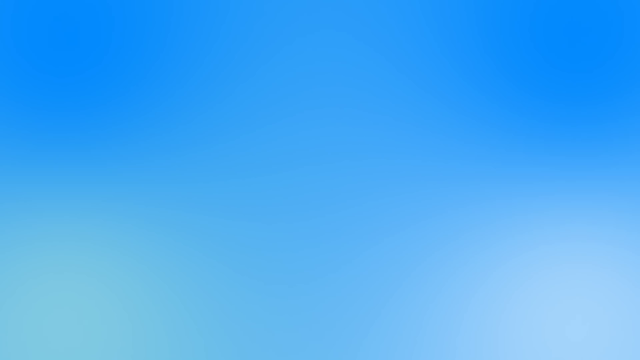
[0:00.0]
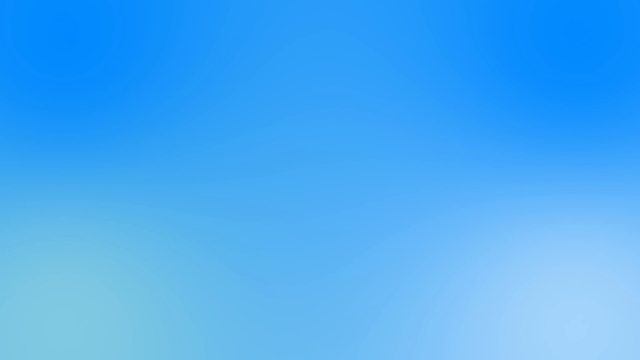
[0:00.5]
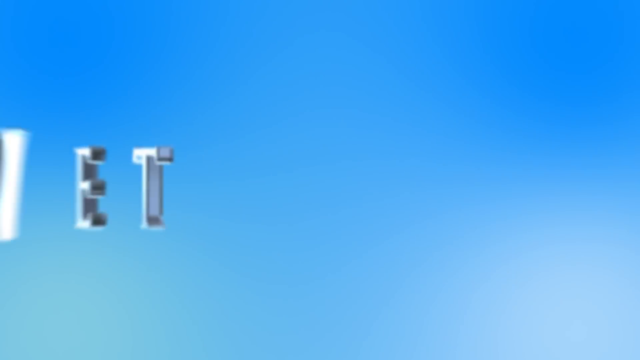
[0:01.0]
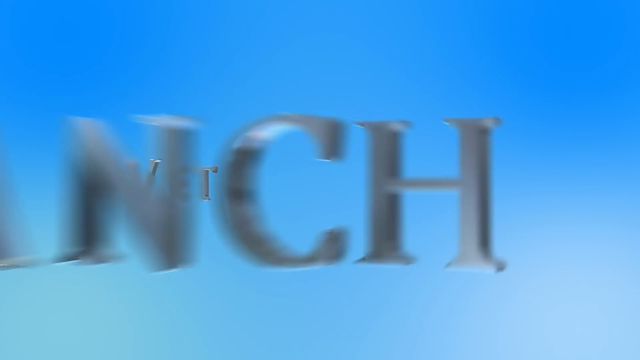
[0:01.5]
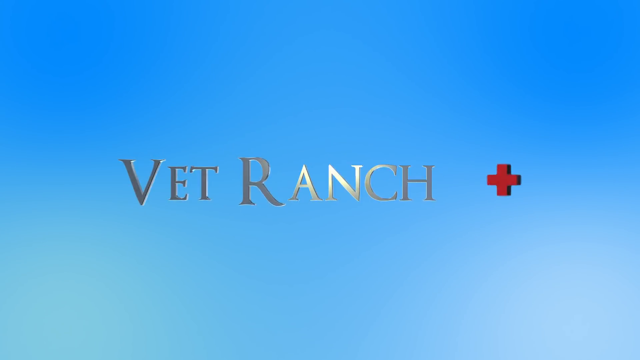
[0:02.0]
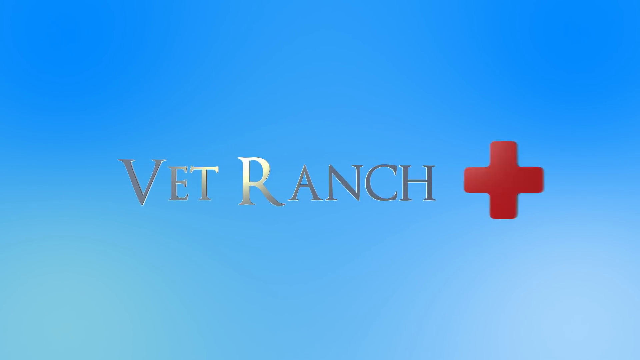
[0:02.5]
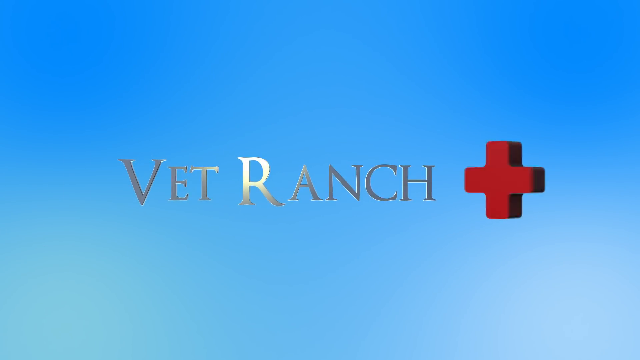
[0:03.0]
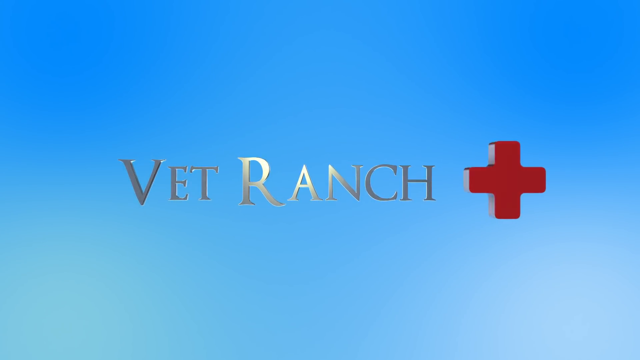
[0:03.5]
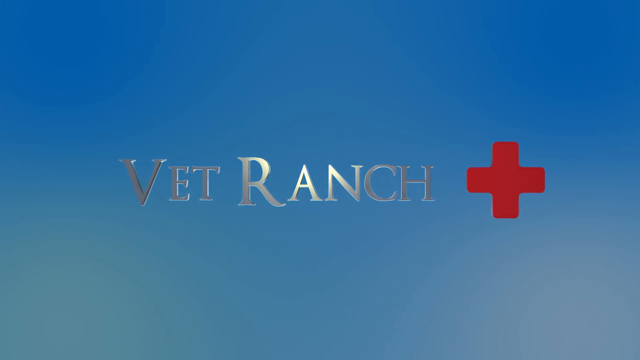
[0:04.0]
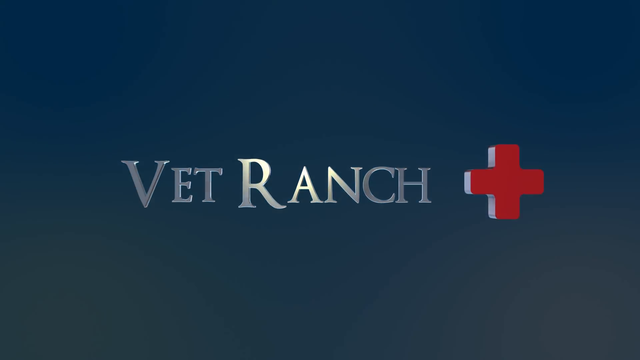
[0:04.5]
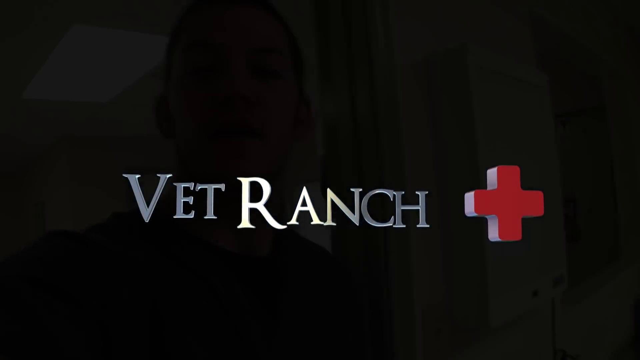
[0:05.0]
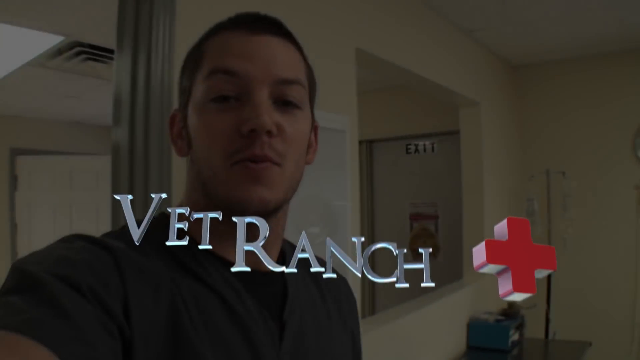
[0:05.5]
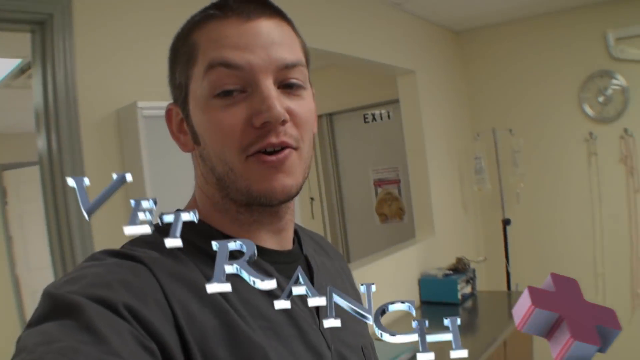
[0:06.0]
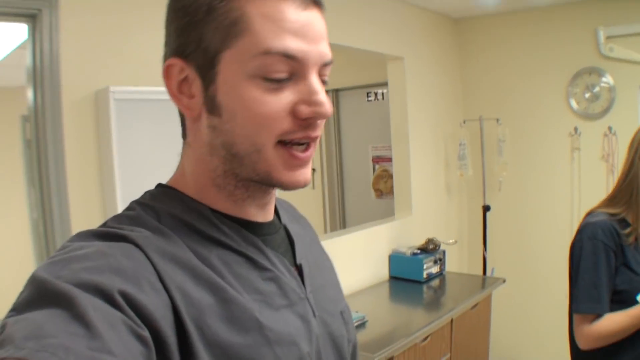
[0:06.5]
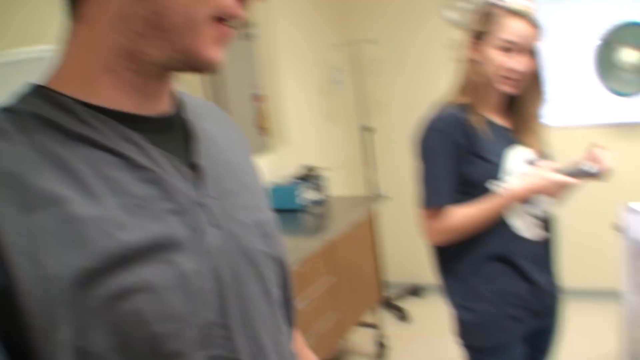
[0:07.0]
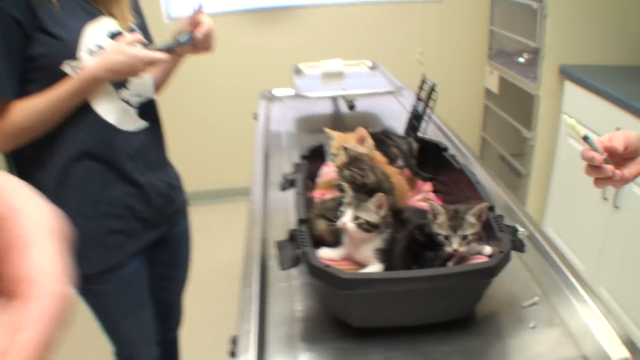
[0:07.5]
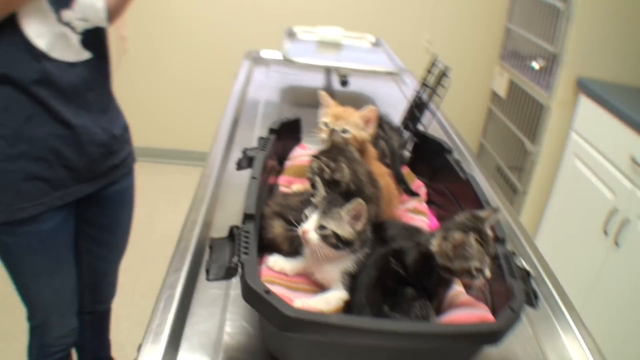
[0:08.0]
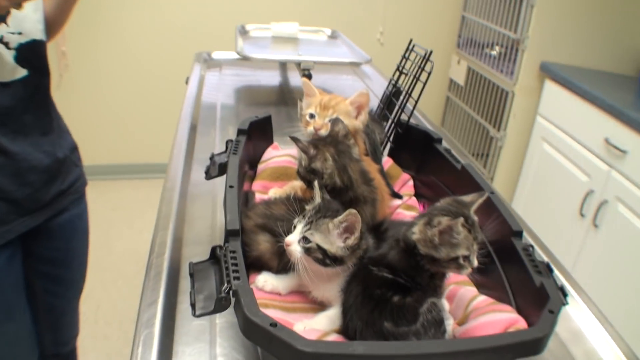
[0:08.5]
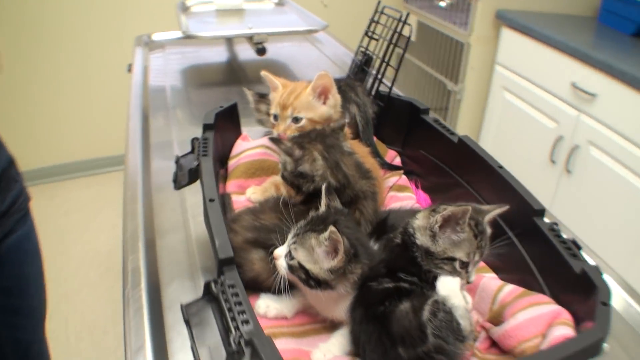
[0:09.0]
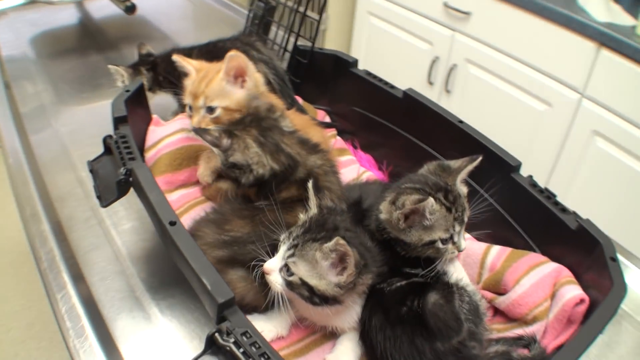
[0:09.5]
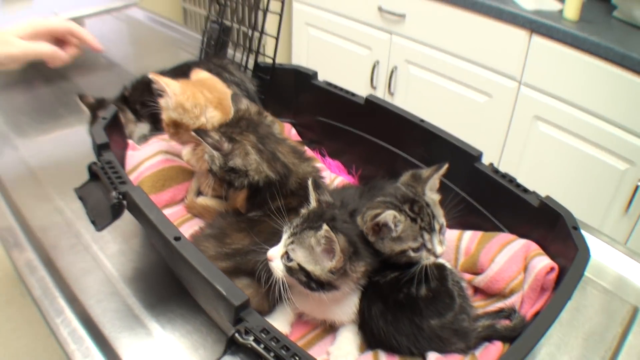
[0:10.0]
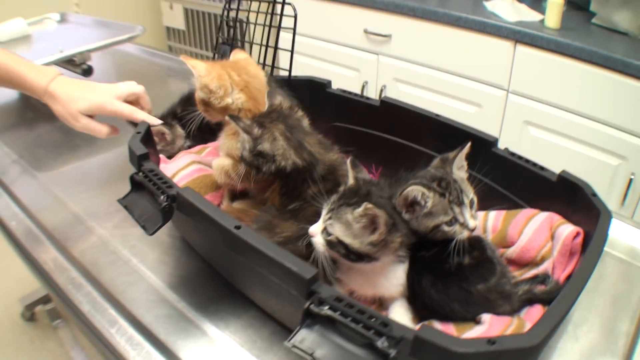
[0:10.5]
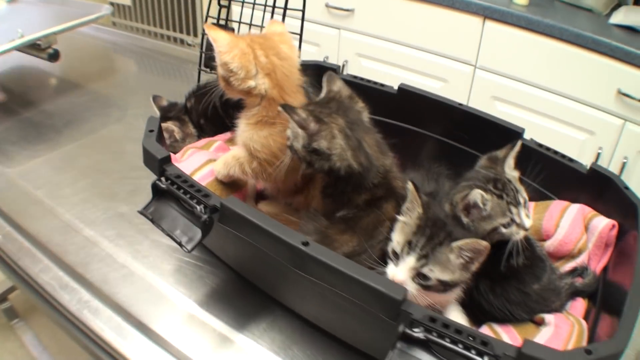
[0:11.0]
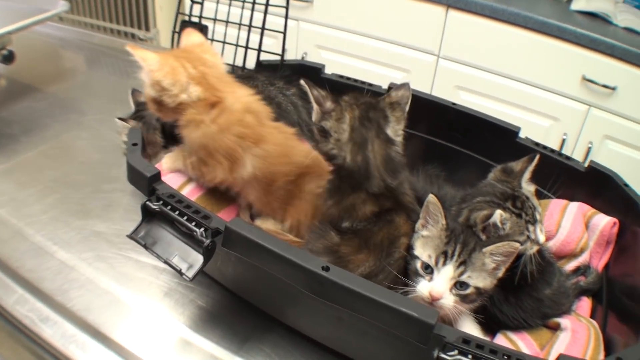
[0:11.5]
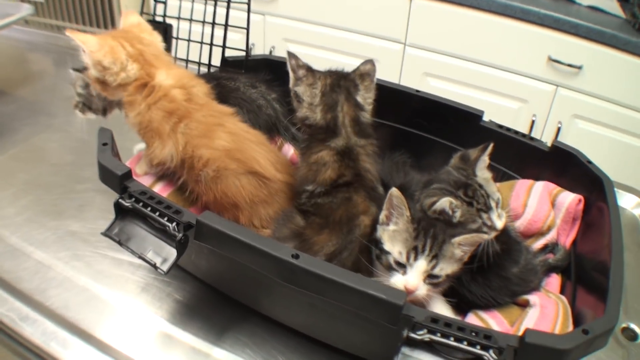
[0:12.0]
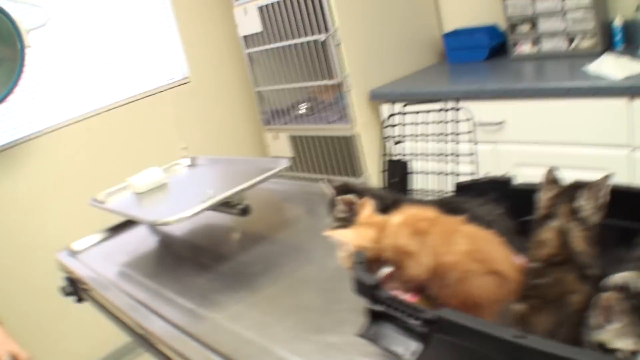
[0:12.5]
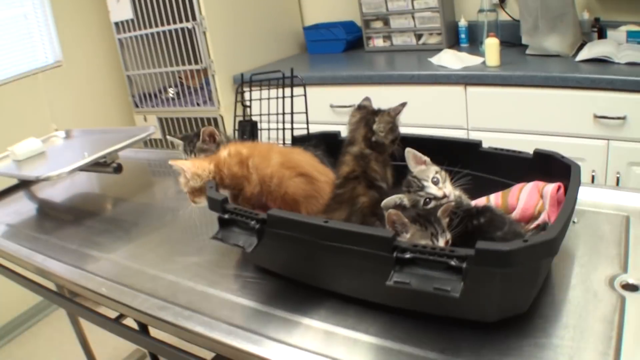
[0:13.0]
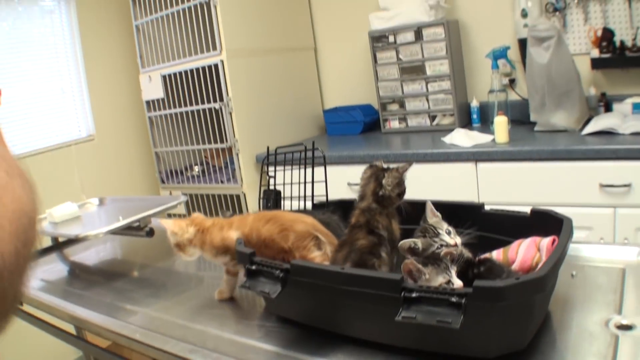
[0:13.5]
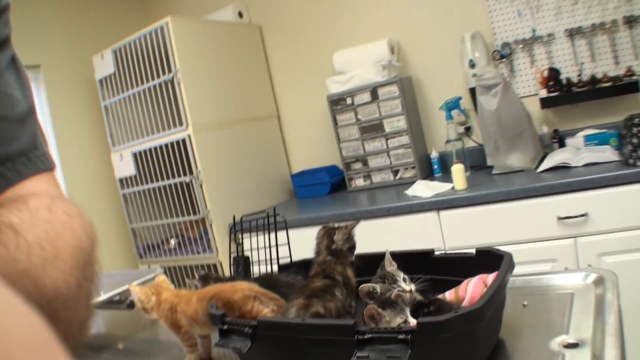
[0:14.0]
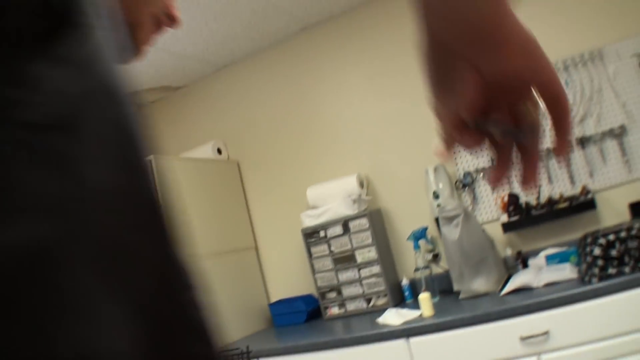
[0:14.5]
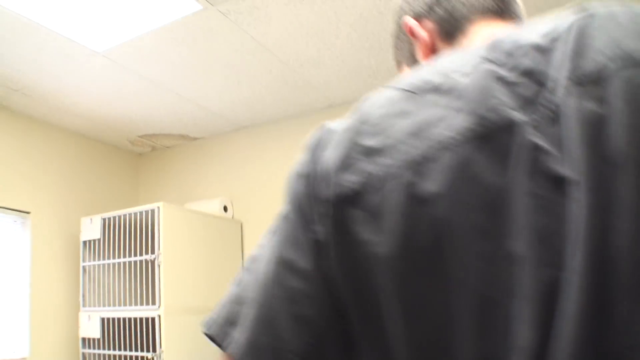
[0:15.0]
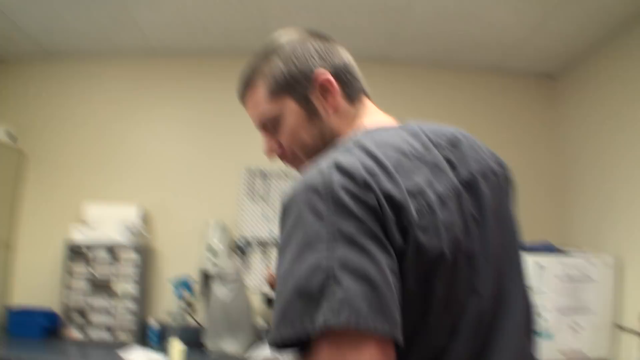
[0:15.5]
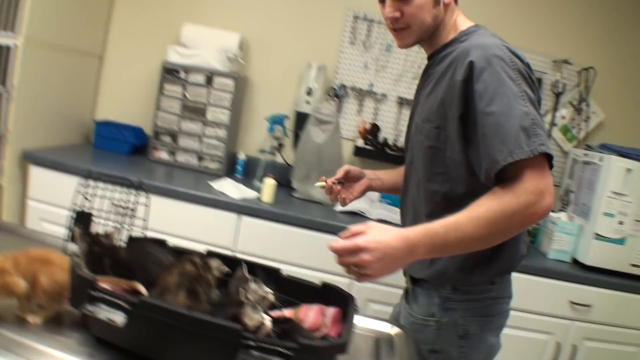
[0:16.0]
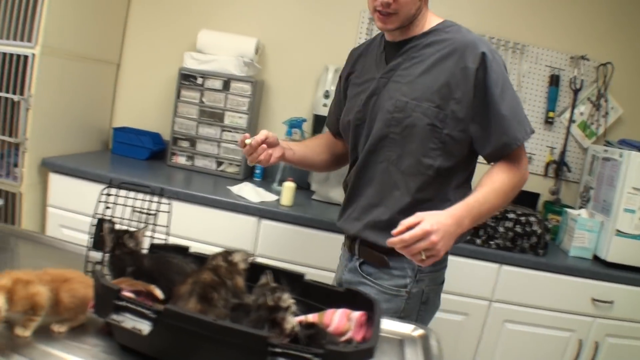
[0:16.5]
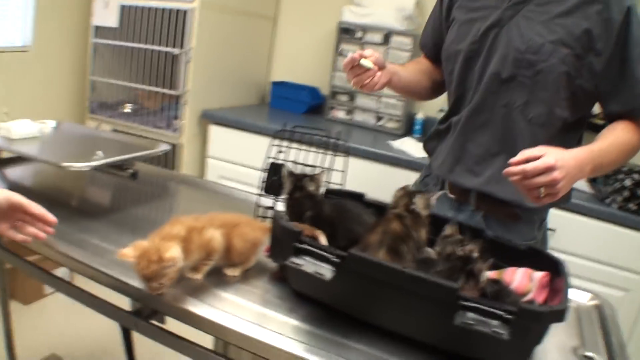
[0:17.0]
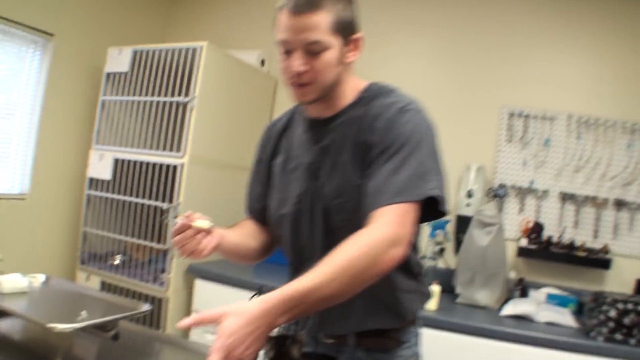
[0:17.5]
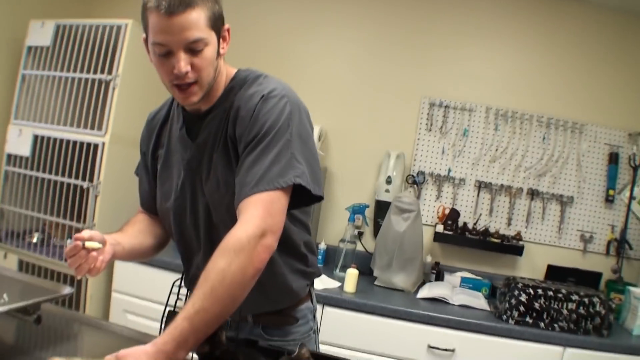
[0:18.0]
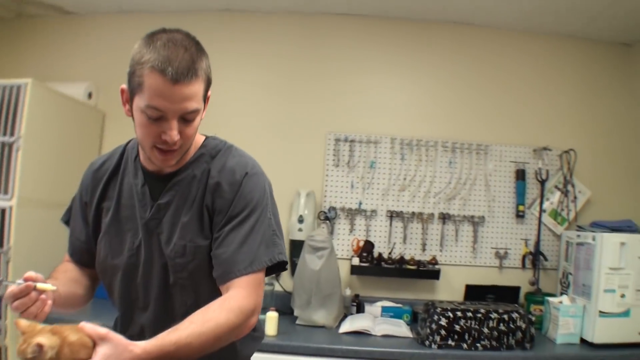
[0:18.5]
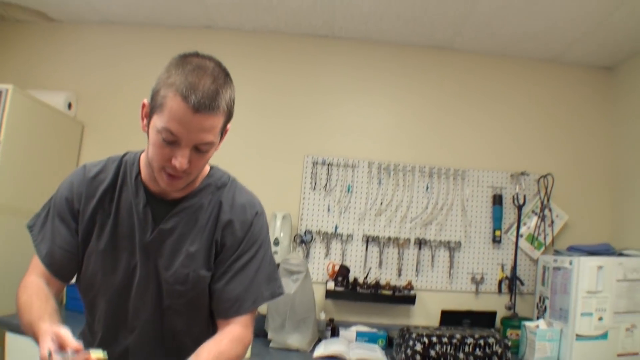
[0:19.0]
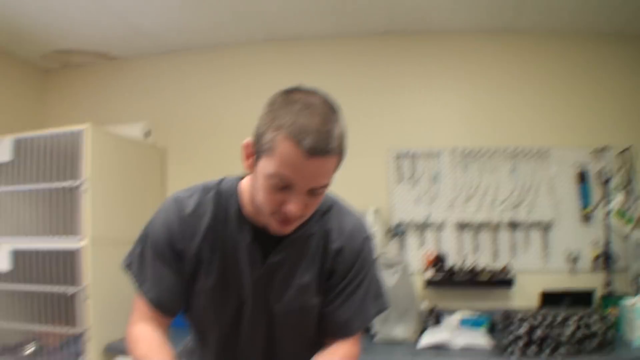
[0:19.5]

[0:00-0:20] At a veterinarian clinic, someone has brought in a box full of kittens, apparently maybe eight or nine of them, and they are getting their shots. Some are gray and white, some are brown, white and black, and one is ginger colored. The place is called vet ranch. About three people are working on the kittens, helping to give them shots, while the kittens climb out of the little cat carrier they are in, trying to get away from the needles.